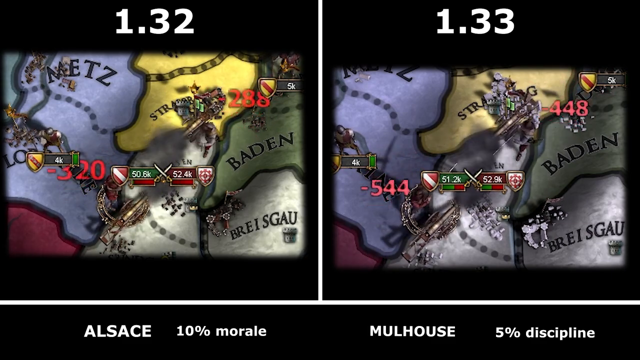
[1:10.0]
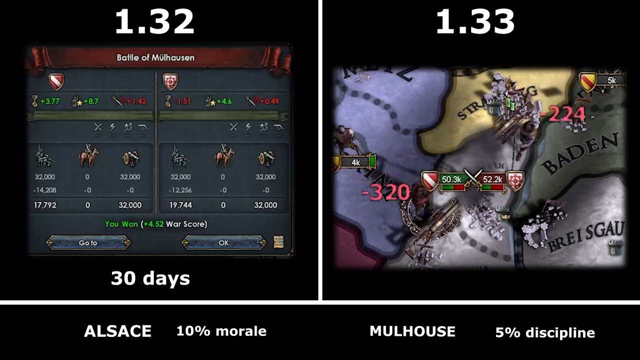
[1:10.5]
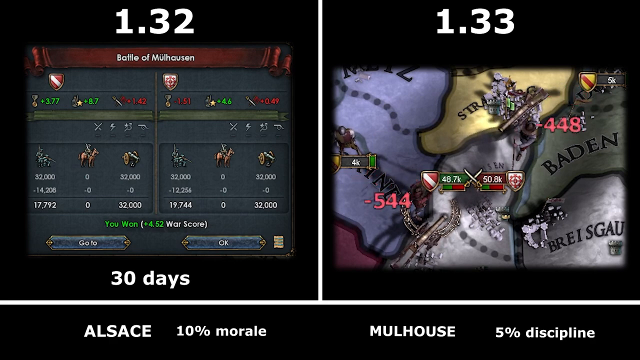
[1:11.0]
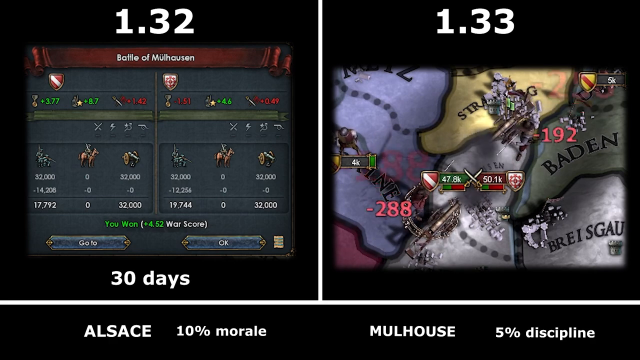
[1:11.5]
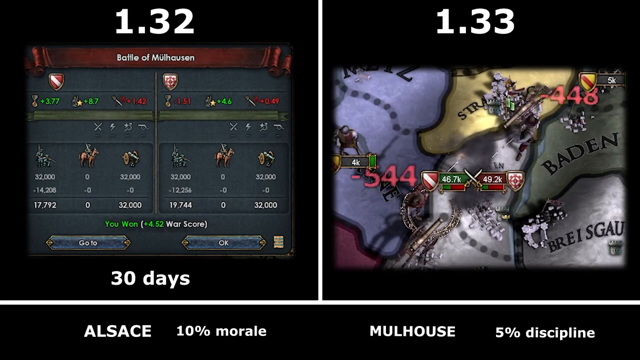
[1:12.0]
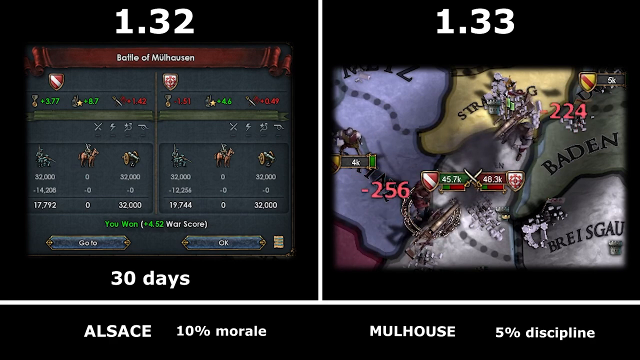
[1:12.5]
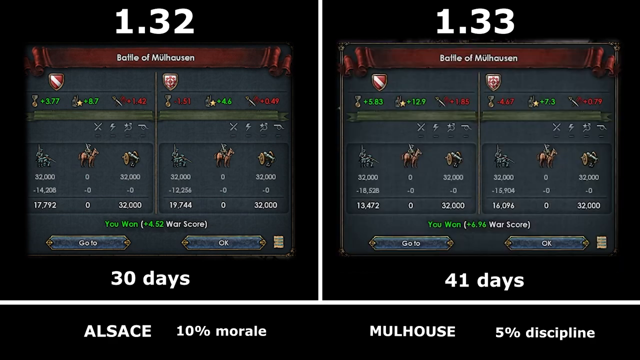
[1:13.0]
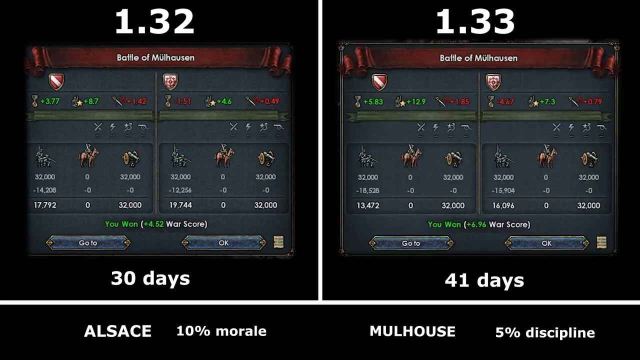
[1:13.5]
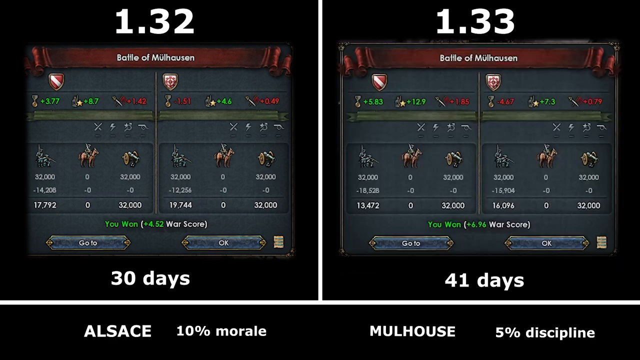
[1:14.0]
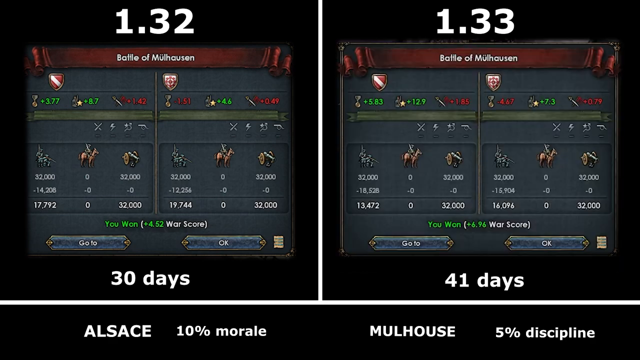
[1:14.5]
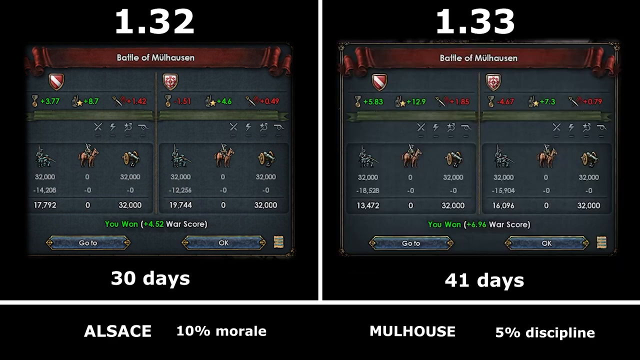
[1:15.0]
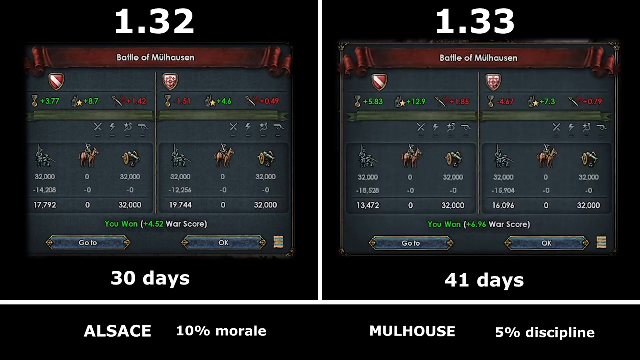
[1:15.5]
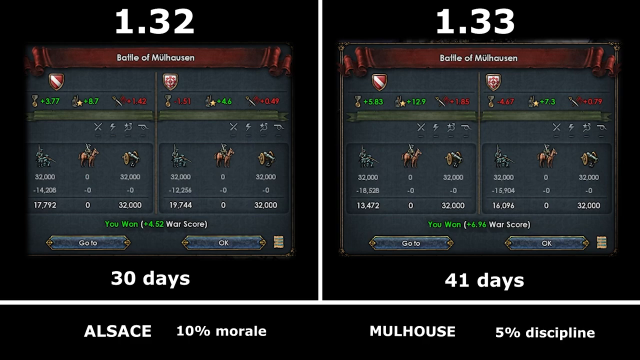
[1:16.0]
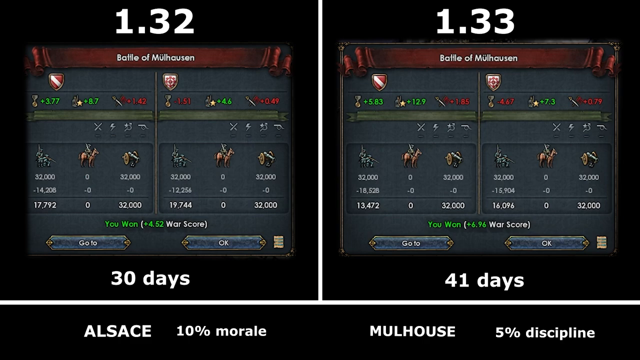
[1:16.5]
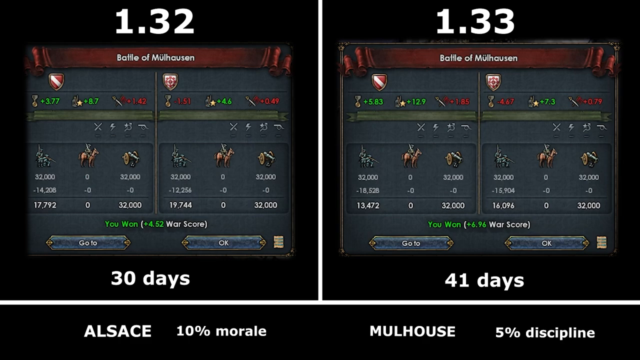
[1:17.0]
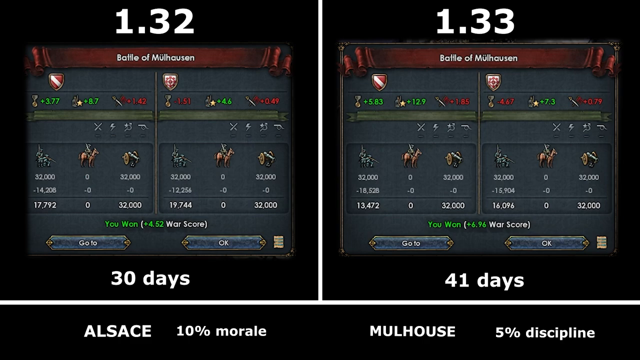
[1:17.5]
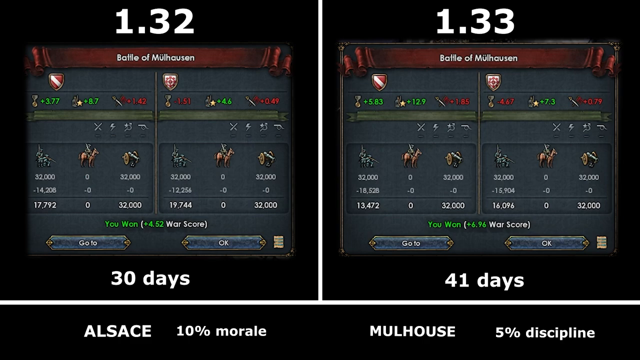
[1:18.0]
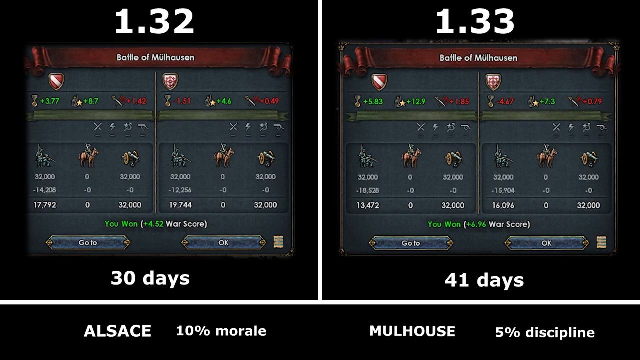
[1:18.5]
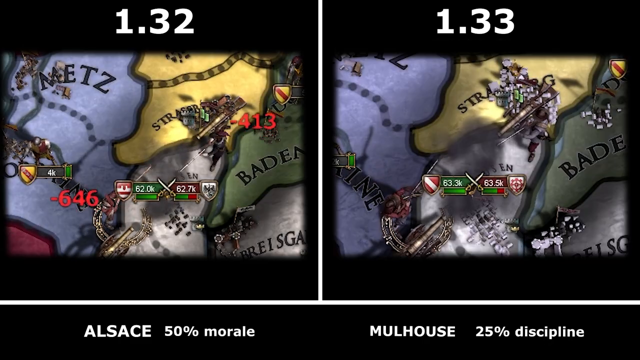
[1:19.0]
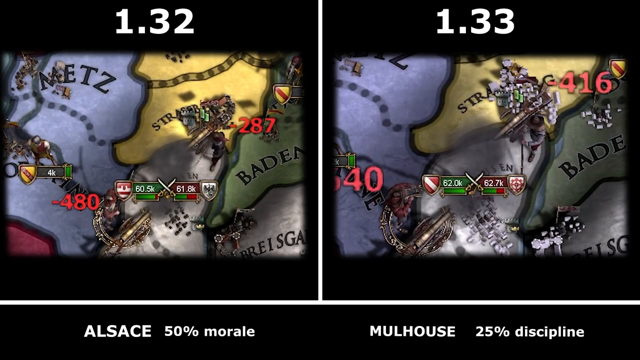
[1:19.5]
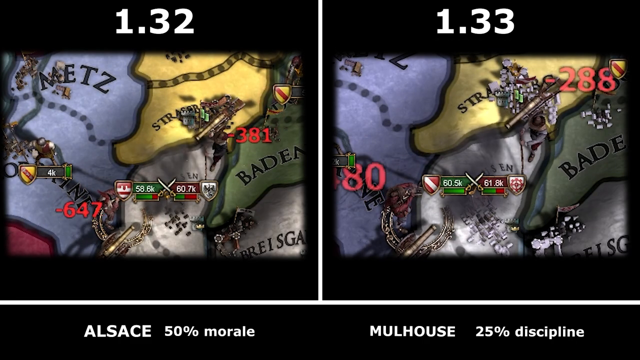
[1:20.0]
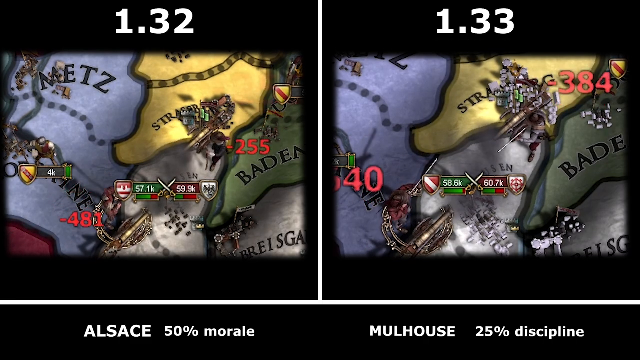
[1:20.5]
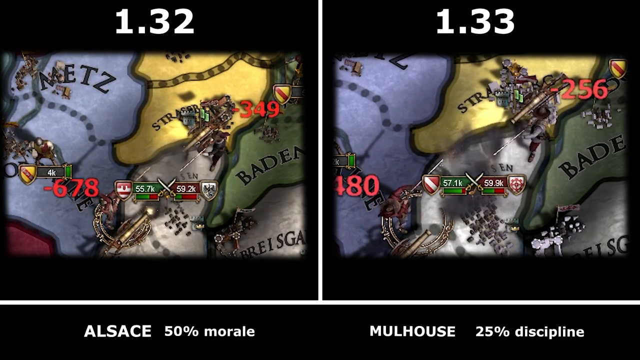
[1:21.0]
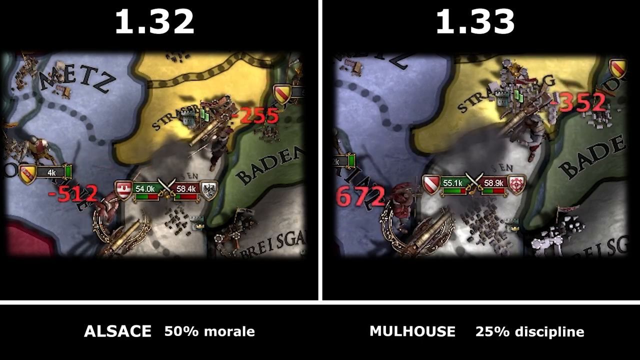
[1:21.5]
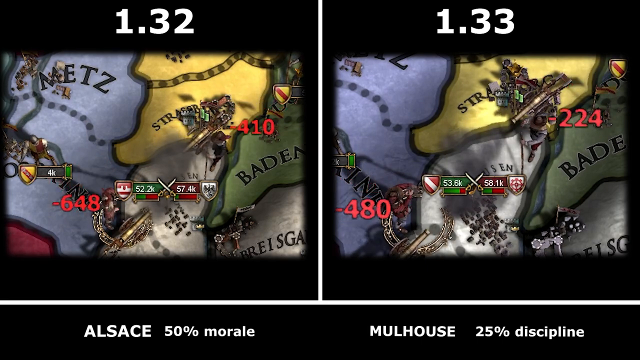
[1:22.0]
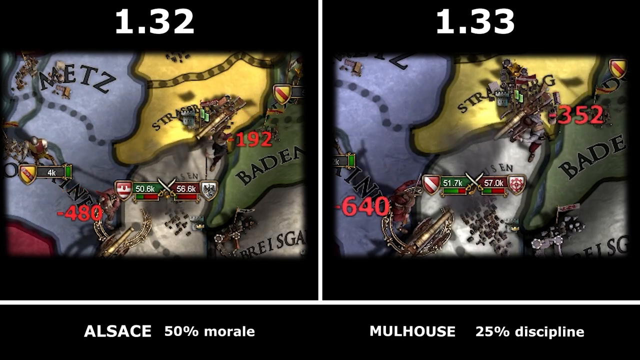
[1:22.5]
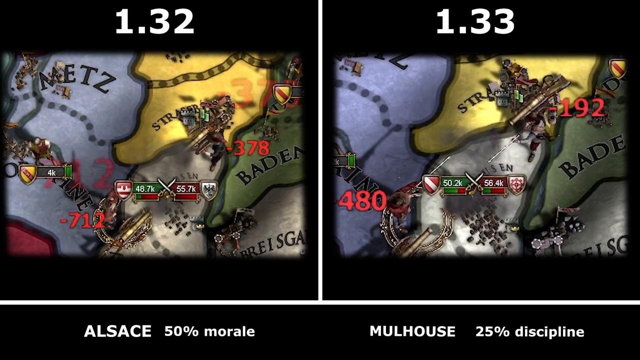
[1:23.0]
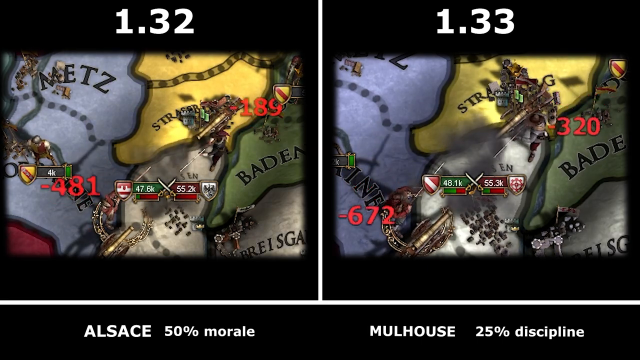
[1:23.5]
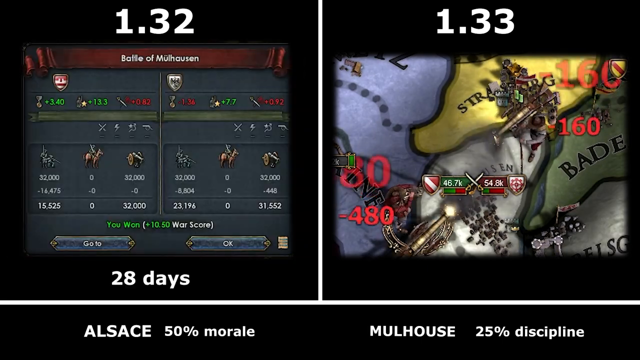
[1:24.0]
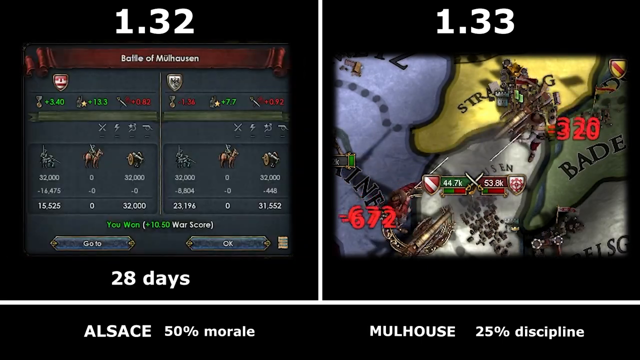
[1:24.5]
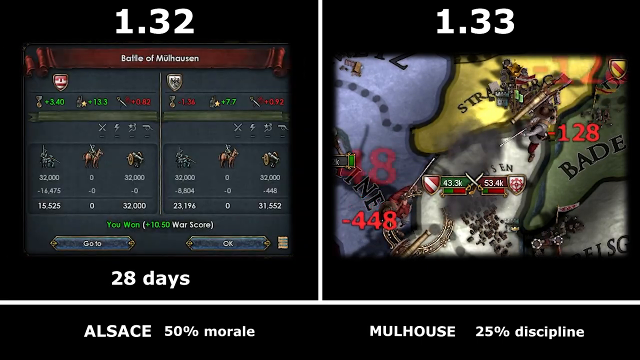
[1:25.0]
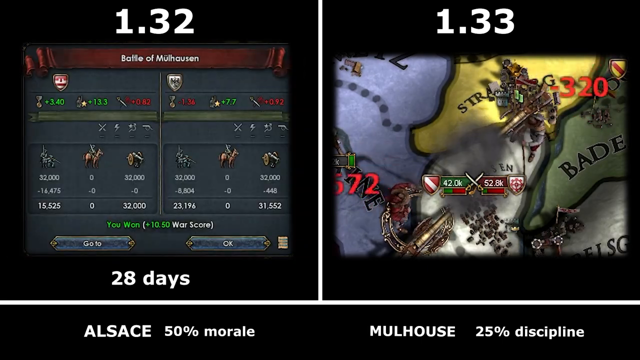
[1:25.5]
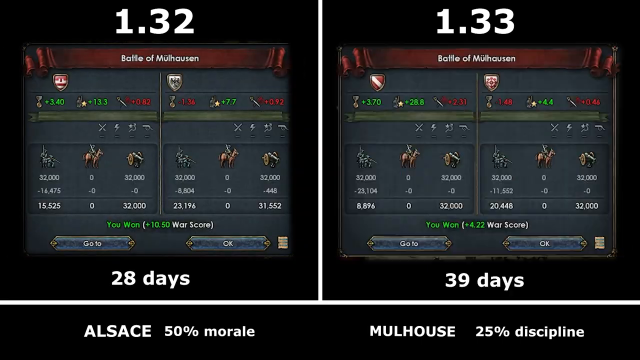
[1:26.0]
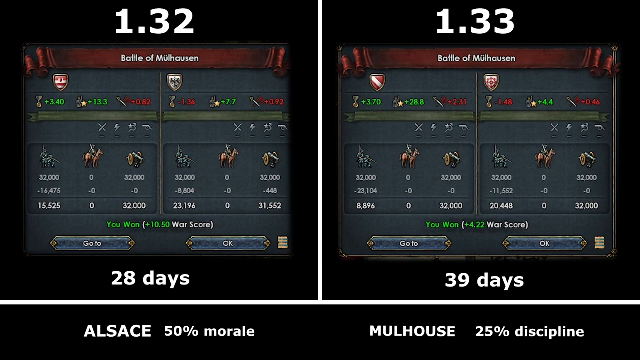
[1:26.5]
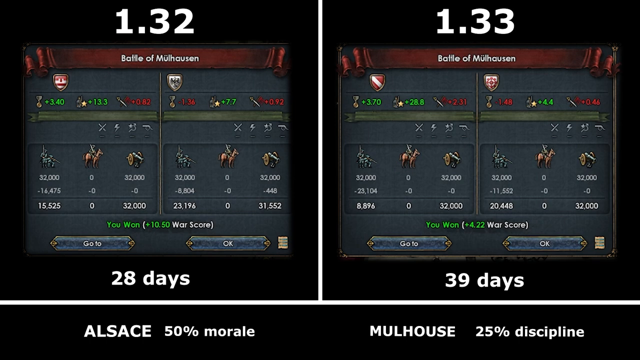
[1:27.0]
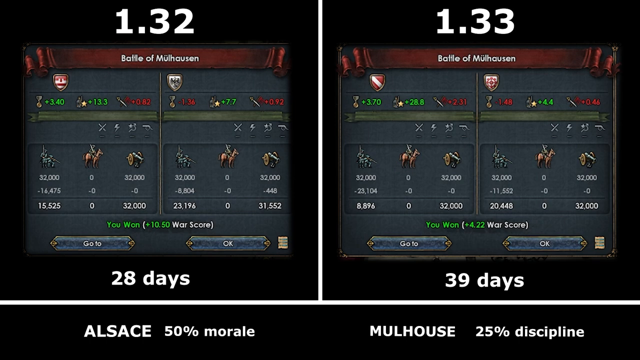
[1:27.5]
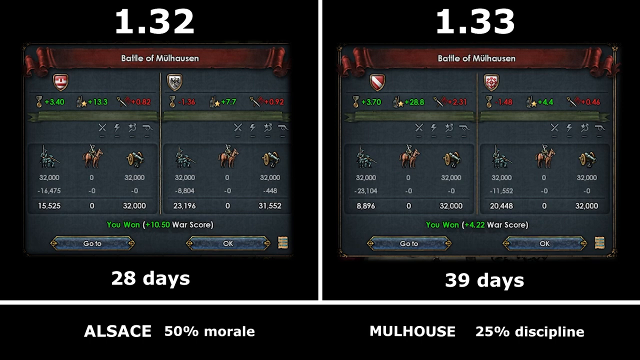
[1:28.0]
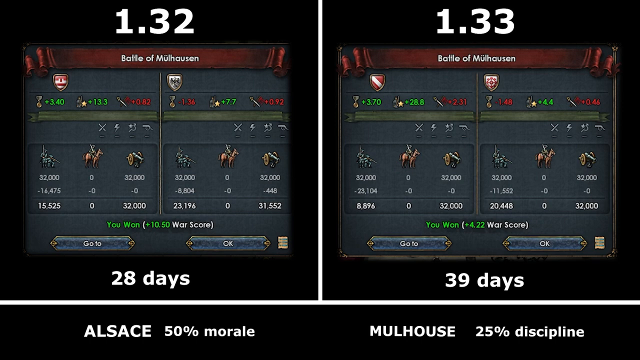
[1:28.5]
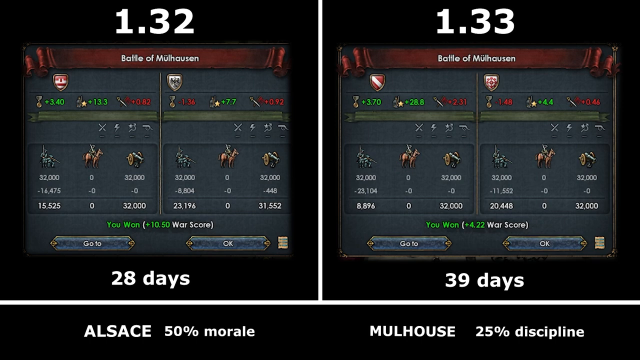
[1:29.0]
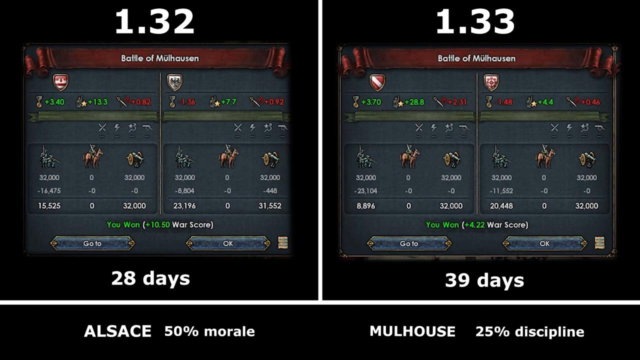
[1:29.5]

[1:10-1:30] Under the Mulhouse side it reads "5% discipline." The stats page returns, with 30 days on the left and 41 on the right, and two buttons above: "Go To" on the left and "OK" on the right. The fighting map screen comes back, where Alsace now shows 50% morale and Mühlhausen shows 25% discipline. The next stats page shows 28 days on the left and 39 days on the right. At the top of this page, underneath "Battle of Mühlhausen," the stats are divided into two columns, each with a different shield above it. Both sides have icons of a medal, what looks like a standing fighter, and a sword, with different numbers next to them. The numbers appear to be either green or red, possibly indicating a positive or negative score in the game.